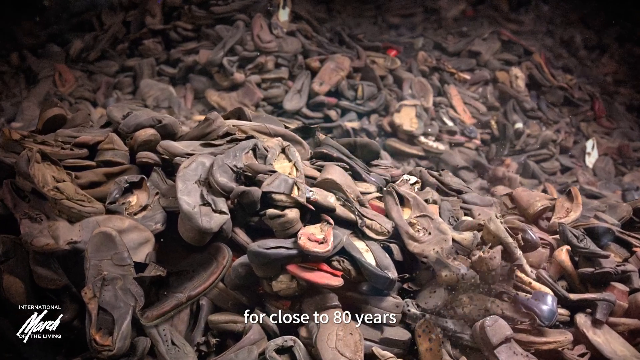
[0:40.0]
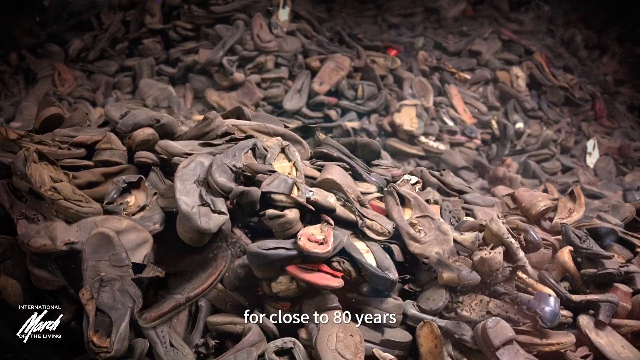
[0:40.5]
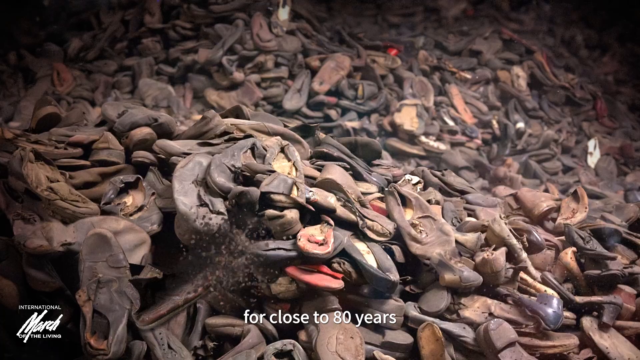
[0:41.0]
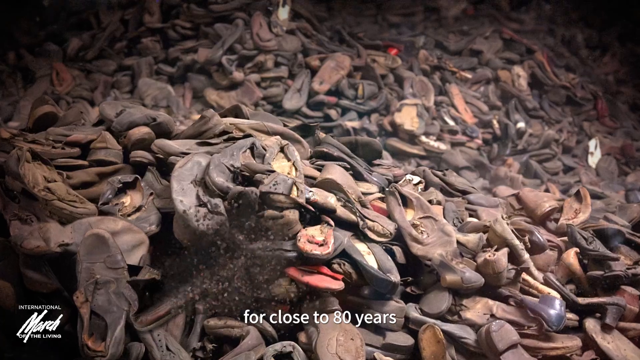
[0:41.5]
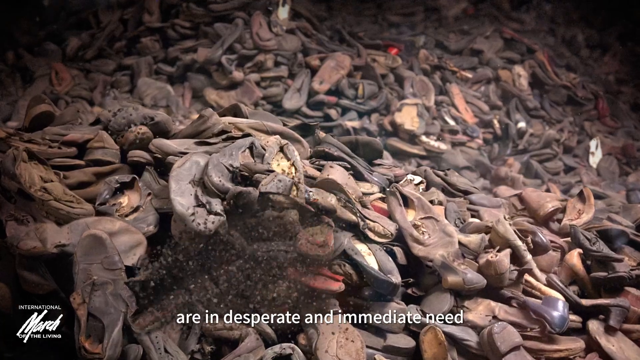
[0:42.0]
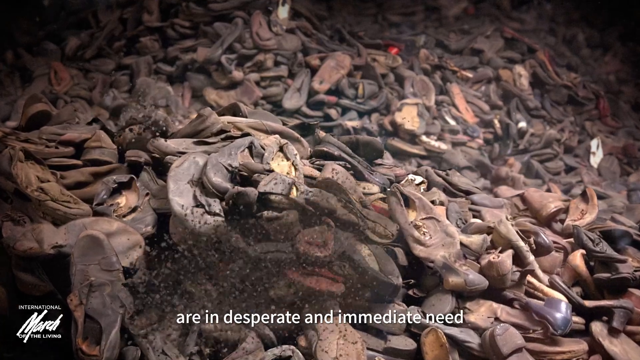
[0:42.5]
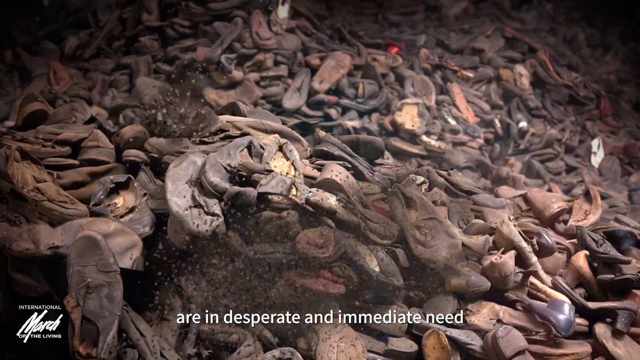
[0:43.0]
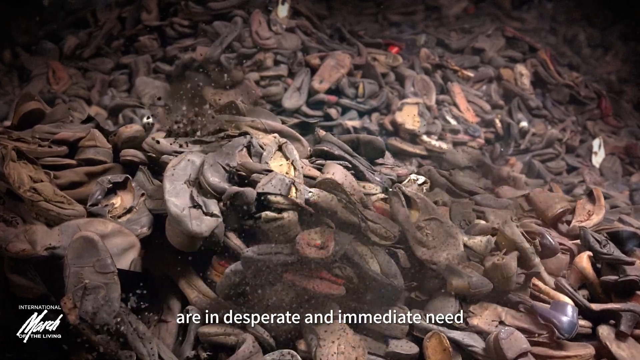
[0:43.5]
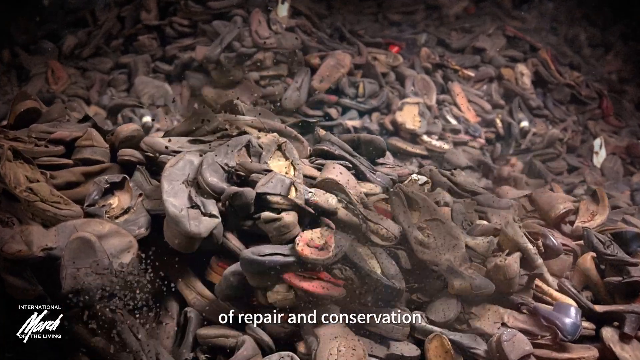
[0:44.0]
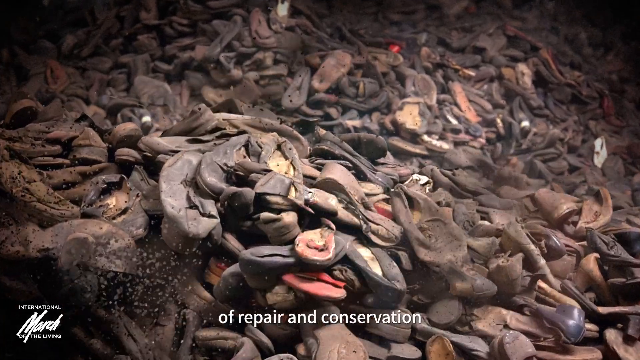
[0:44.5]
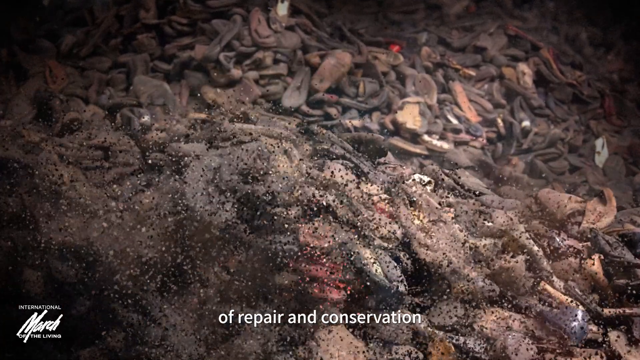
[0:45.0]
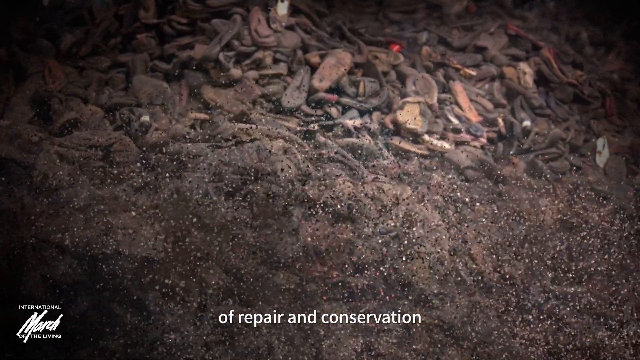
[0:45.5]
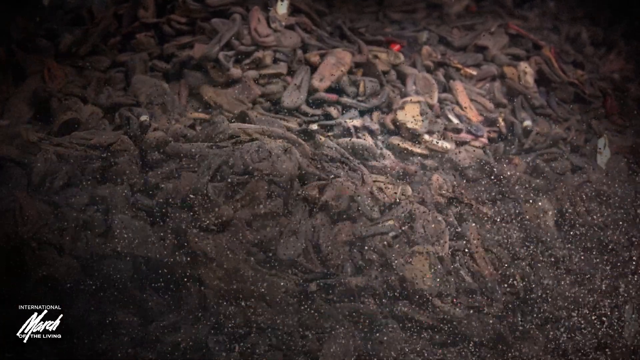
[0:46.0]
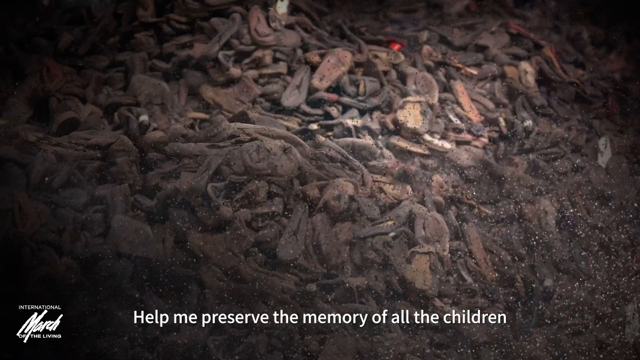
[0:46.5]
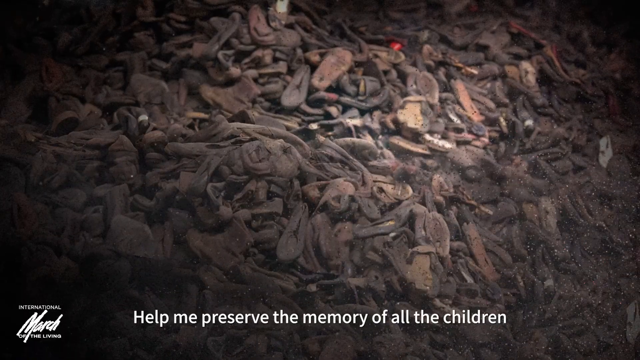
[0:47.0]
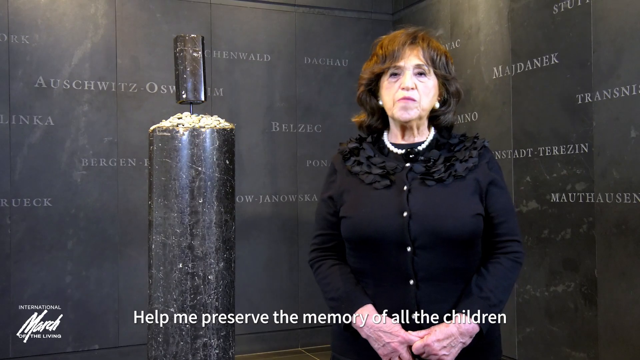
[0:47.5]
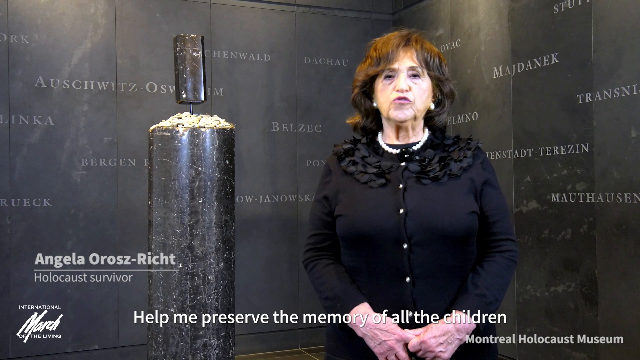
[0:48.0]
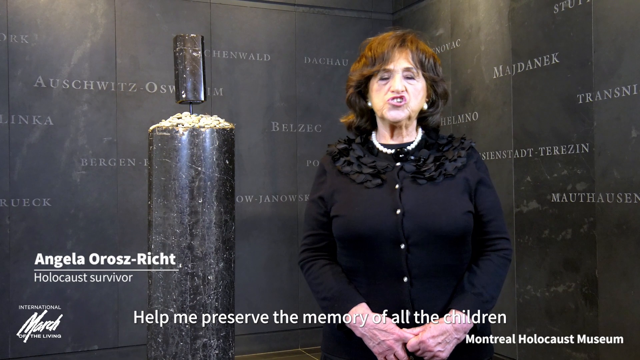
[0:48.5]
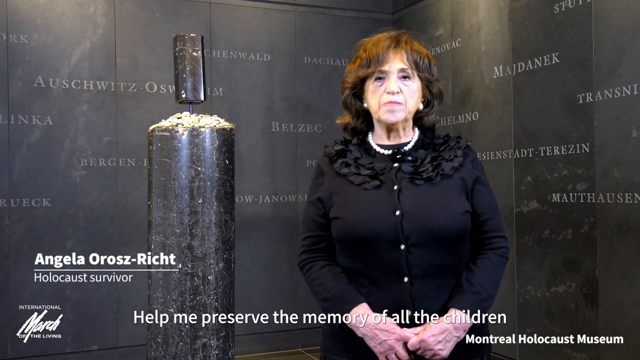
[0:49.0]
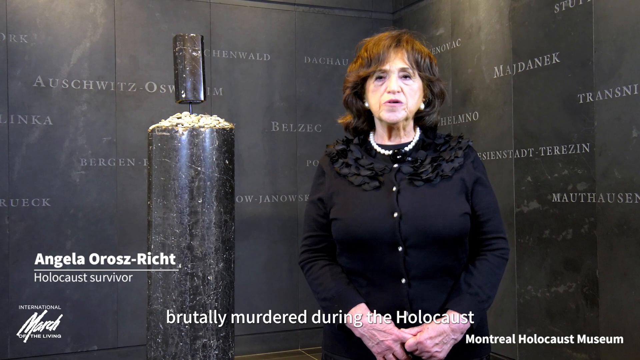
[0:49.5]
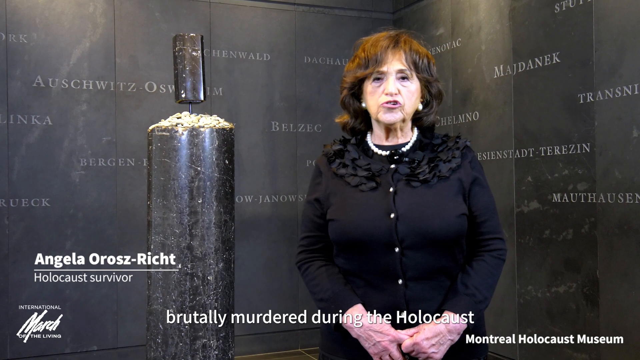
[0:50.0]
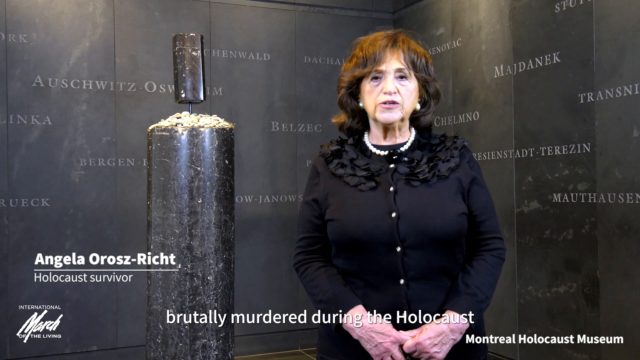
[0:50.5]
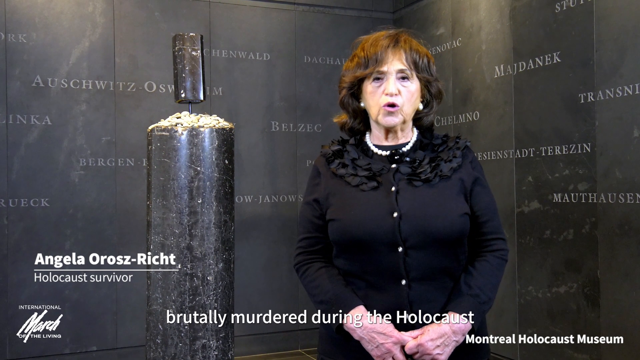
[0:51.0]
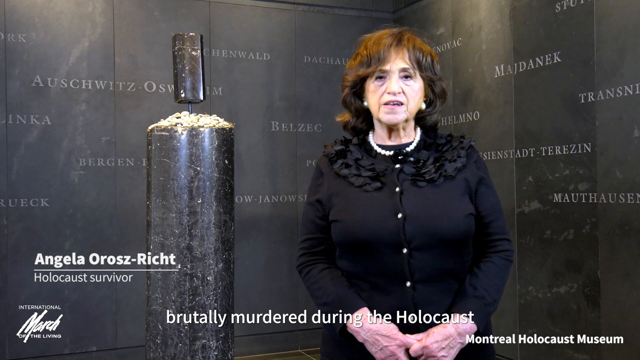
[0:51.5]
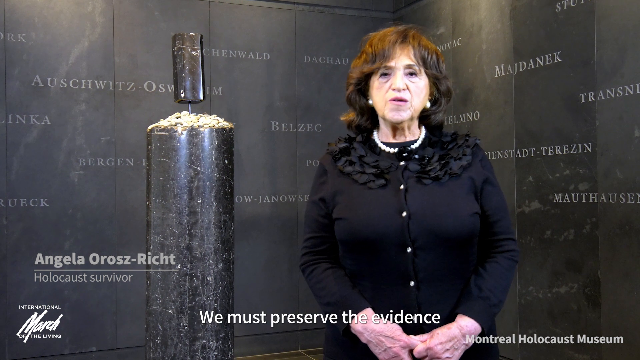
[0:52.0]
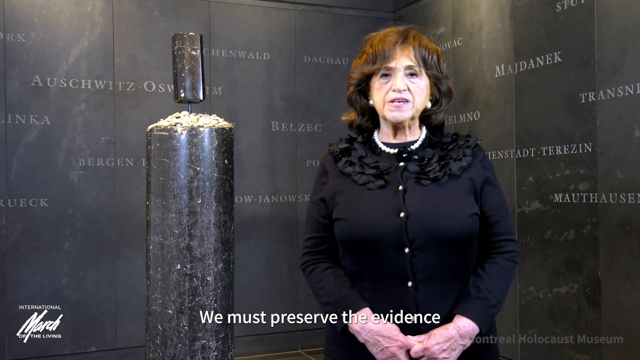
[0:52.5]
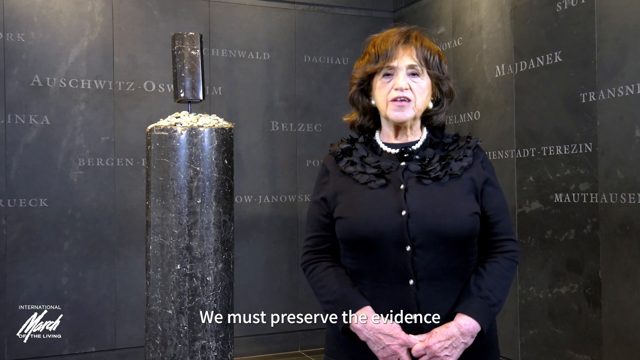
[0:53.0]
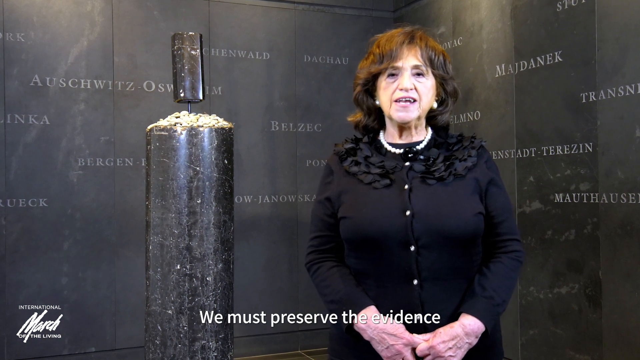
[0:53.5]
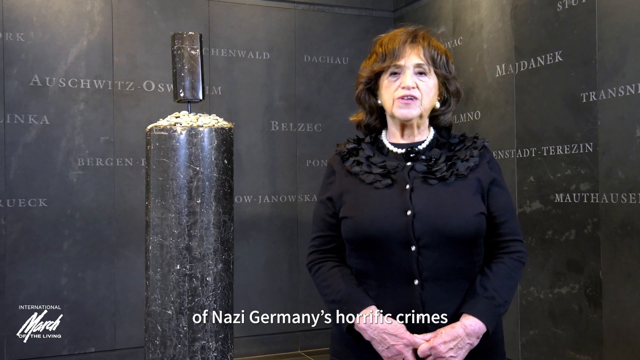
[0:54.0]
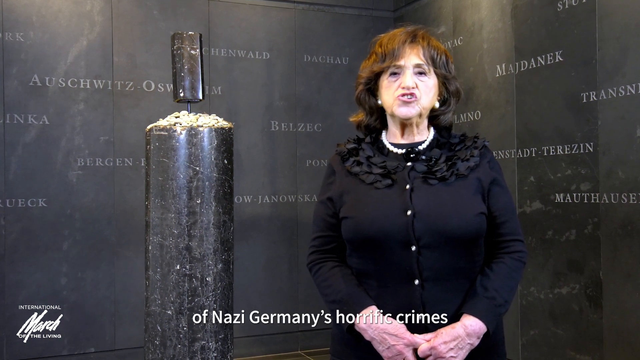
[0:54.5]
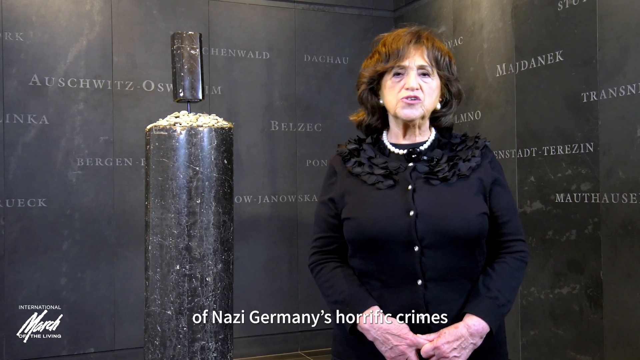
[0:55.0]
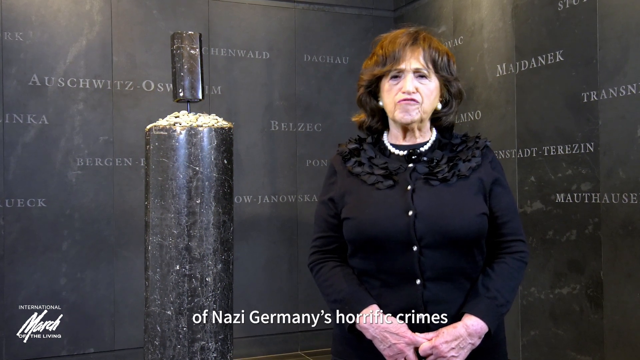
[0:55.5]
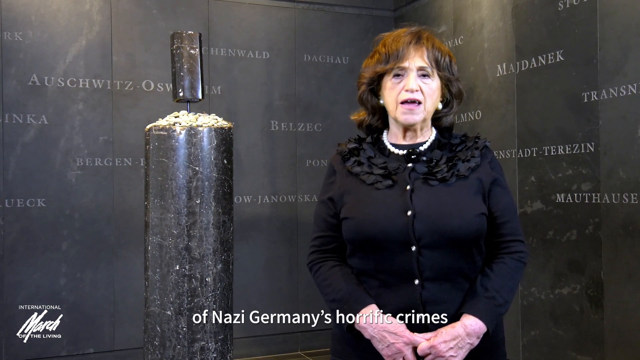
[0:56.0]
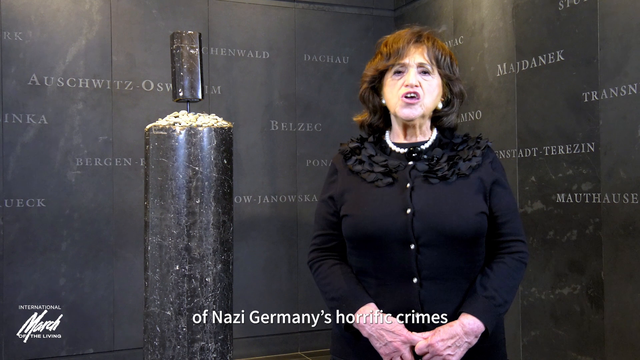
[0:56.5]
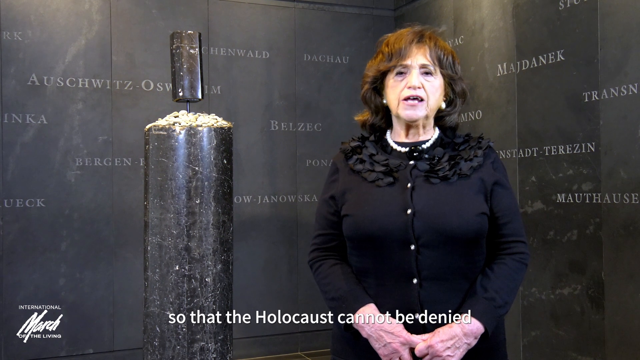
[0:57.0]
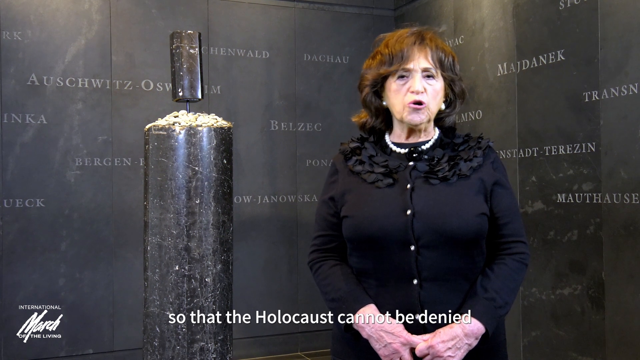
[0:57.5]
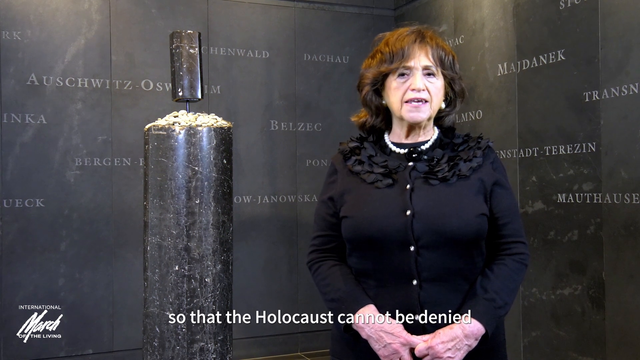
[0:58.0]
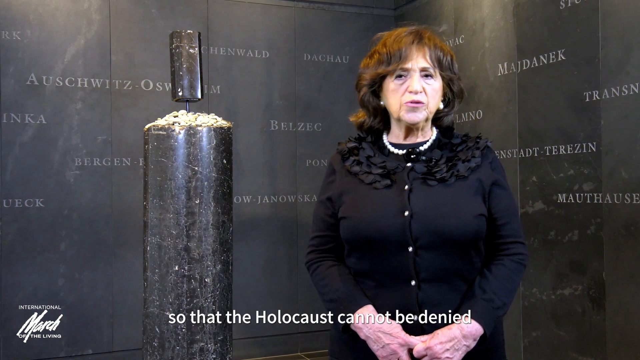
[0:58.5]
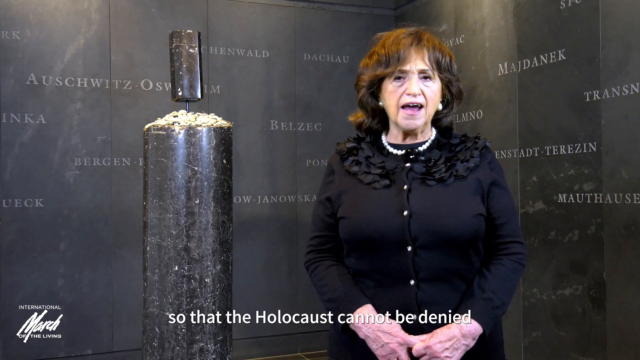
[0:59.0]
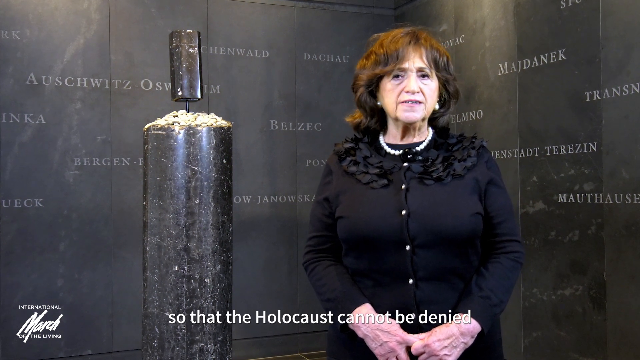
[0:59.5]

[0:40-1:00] A flattened pile of children's shoes is shown, and then CGI ashes blow in, scattered from the bottom left corner of the screen, covering half the image of the shoes. It looks like a display inside a Holocaust museum. Next comes an interview with a woman named Angela Orozks-Richt, with the words "Holocaust survivor" underneath her name. She is talking to the camera. She is dressed in black, wearing a buttoned-up cardigan with a black frilly collar, a white strand of large pearls and pearl earrings. She has wavy, shoulder-length brown hair. Behind her is a black screen with words such as "Dachau", "Majdanek" and "Auschwitz", names of concentration camps. White English caption text at the bottom of the screen says "help me preserve the memory of all the children brutally murdered during the Holocaust."